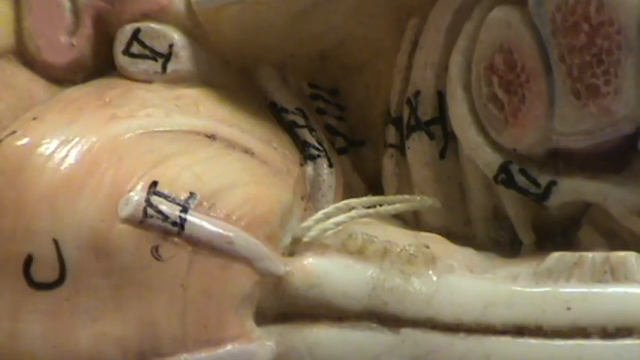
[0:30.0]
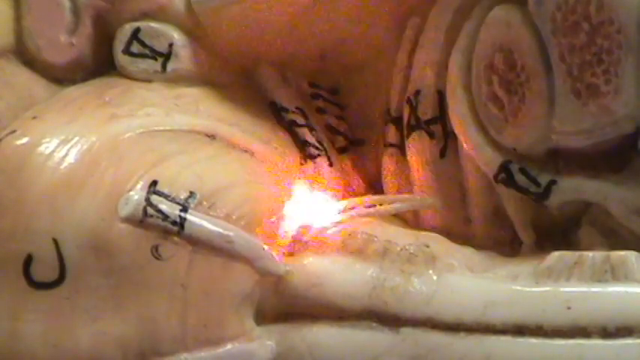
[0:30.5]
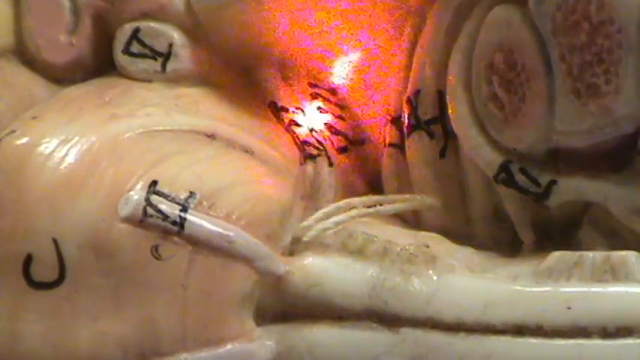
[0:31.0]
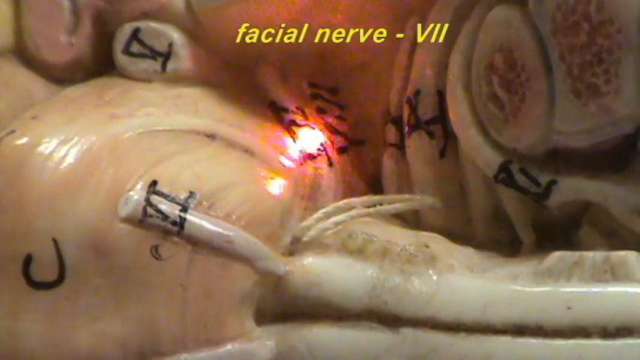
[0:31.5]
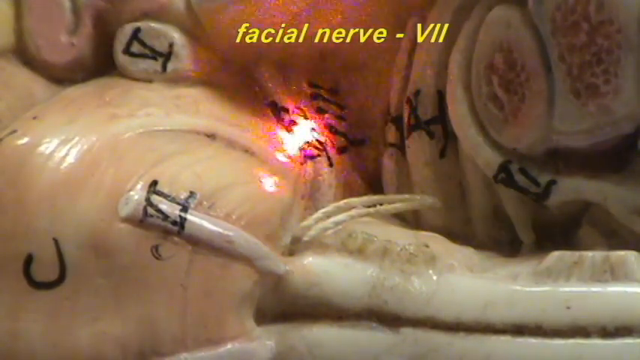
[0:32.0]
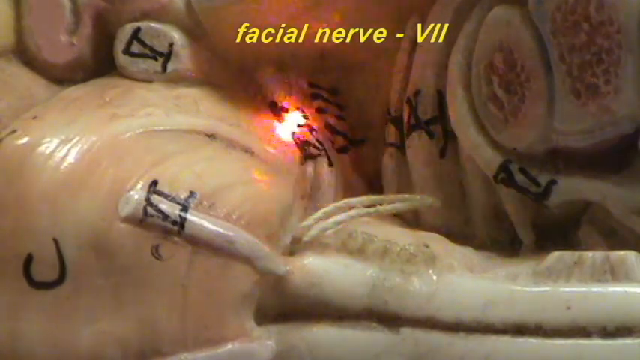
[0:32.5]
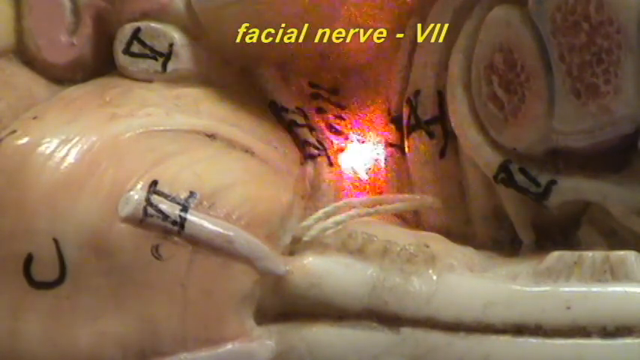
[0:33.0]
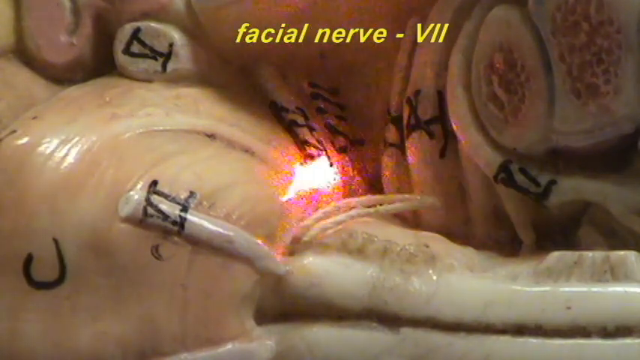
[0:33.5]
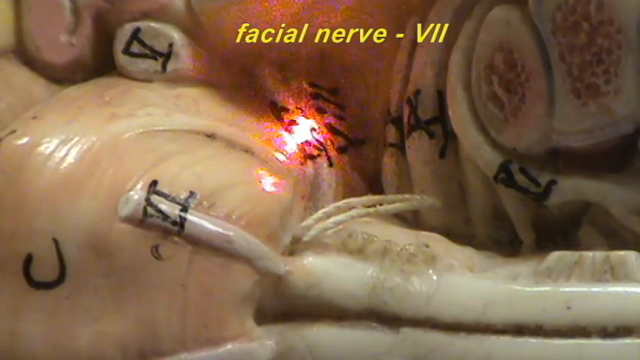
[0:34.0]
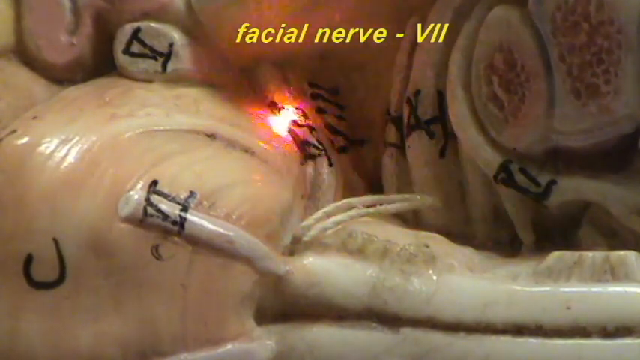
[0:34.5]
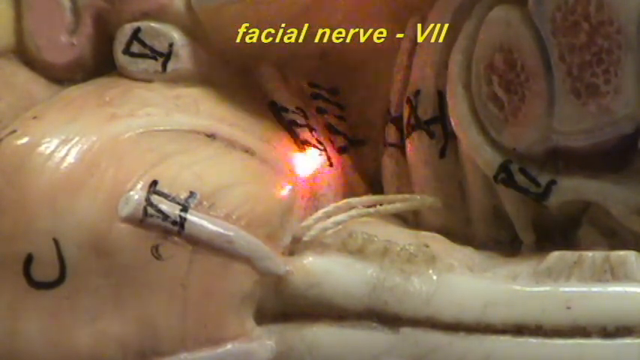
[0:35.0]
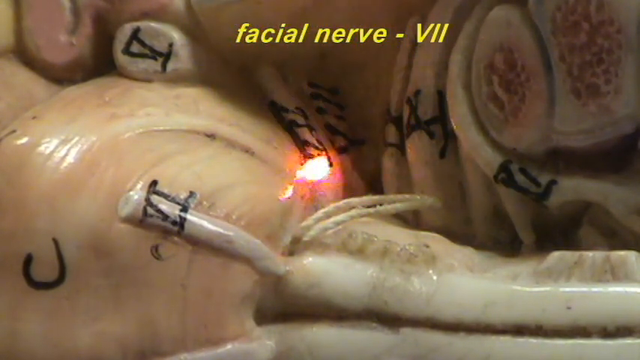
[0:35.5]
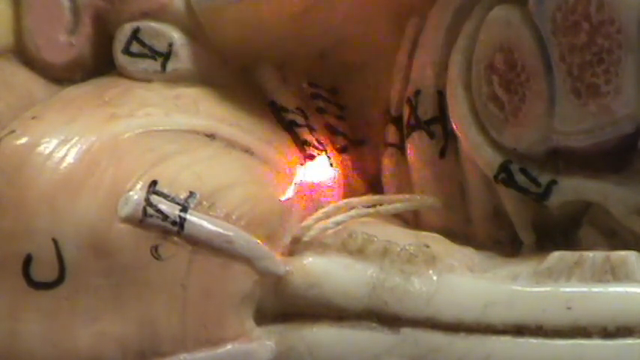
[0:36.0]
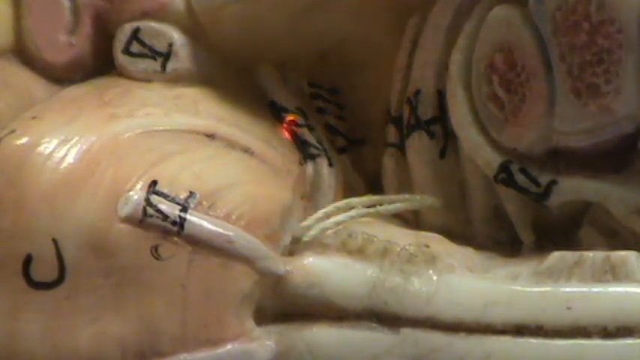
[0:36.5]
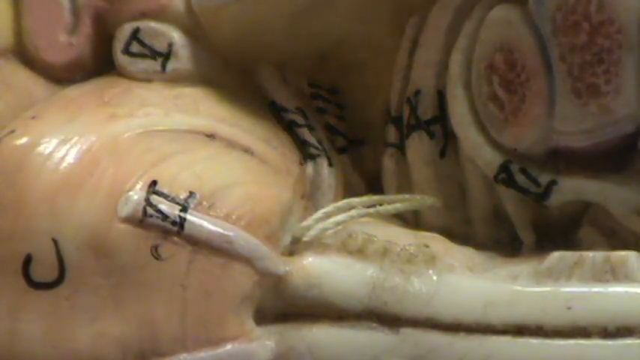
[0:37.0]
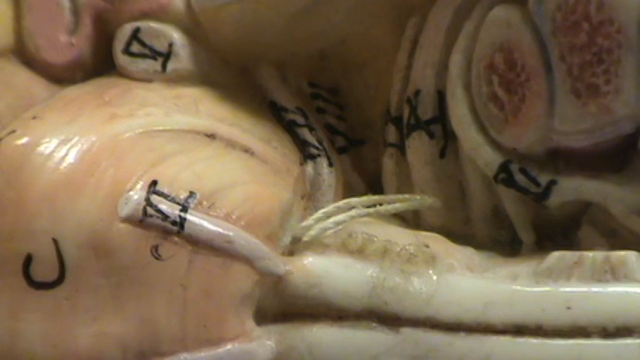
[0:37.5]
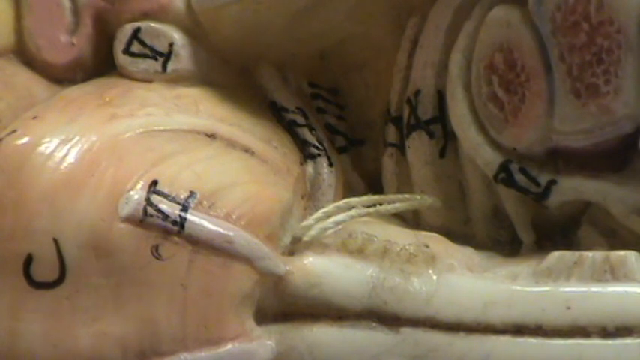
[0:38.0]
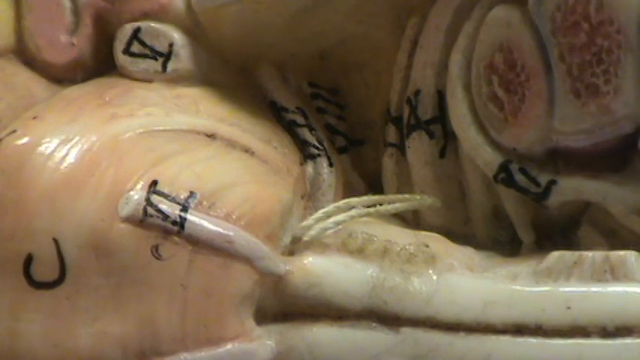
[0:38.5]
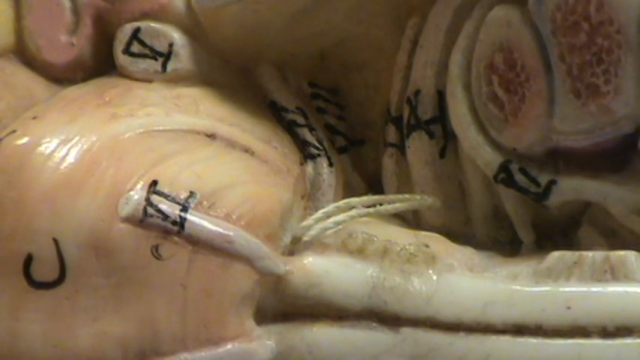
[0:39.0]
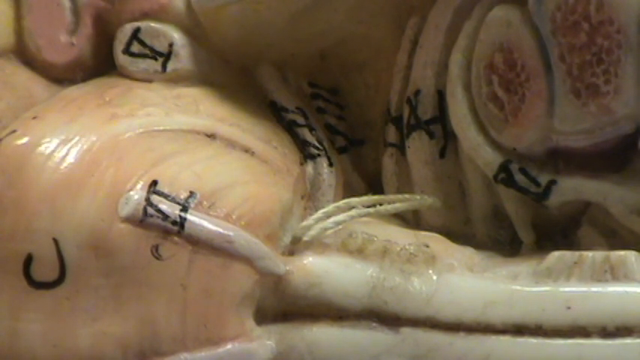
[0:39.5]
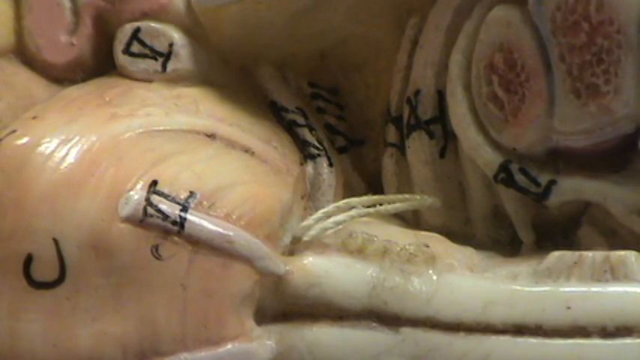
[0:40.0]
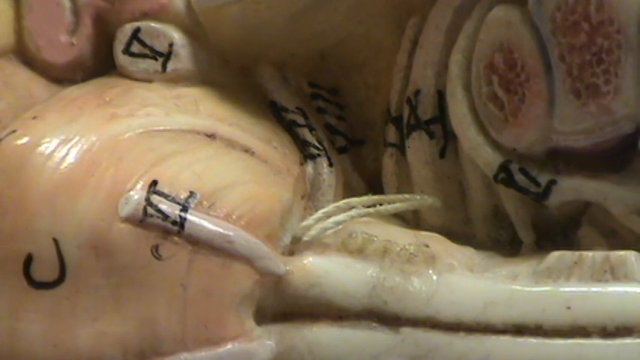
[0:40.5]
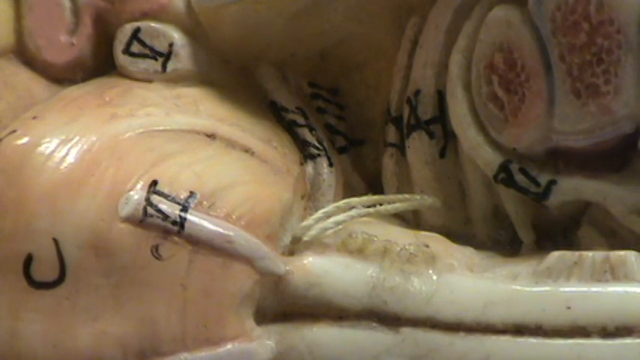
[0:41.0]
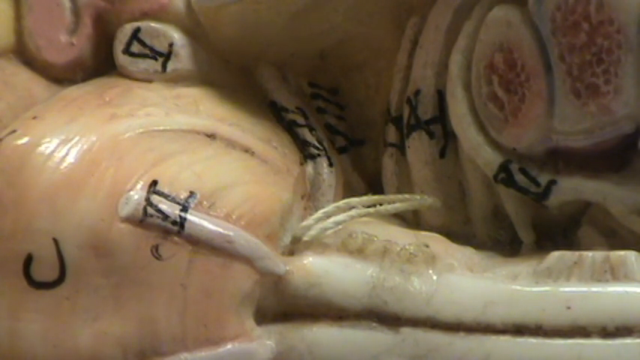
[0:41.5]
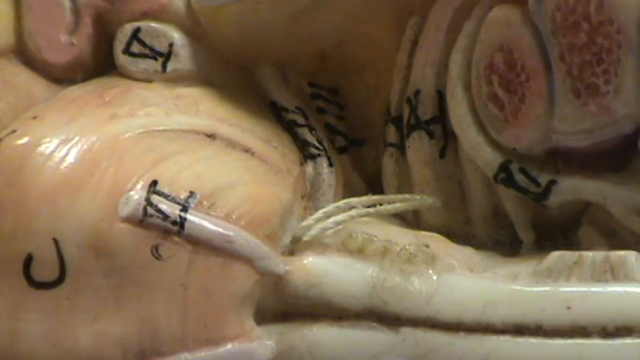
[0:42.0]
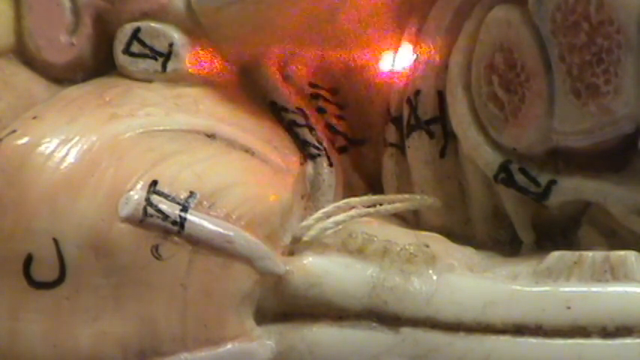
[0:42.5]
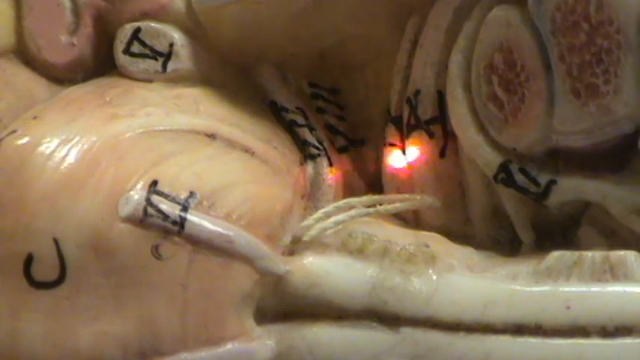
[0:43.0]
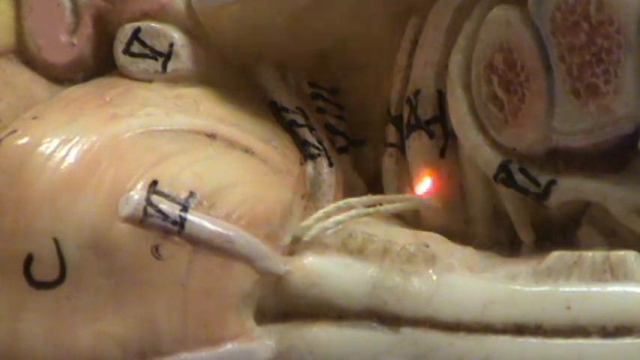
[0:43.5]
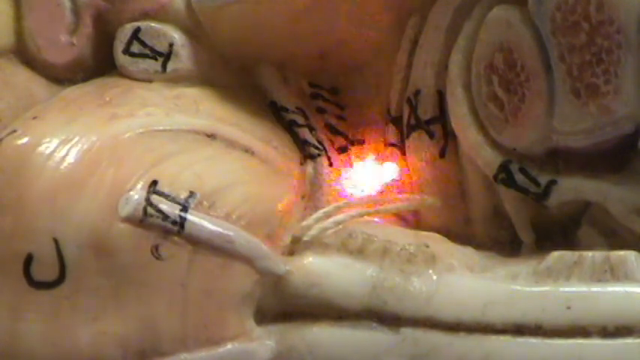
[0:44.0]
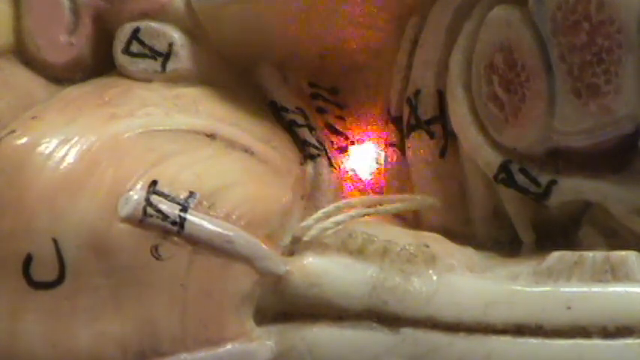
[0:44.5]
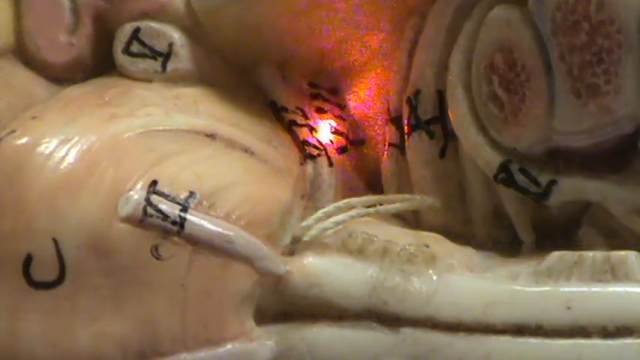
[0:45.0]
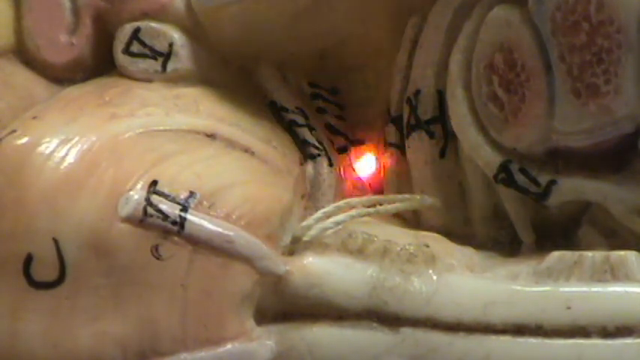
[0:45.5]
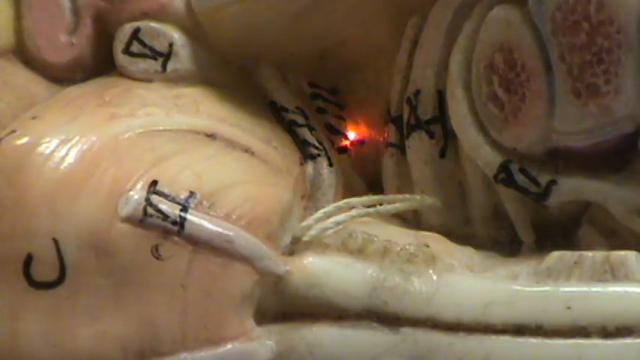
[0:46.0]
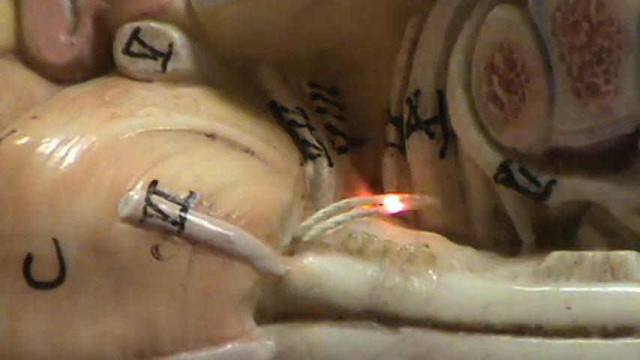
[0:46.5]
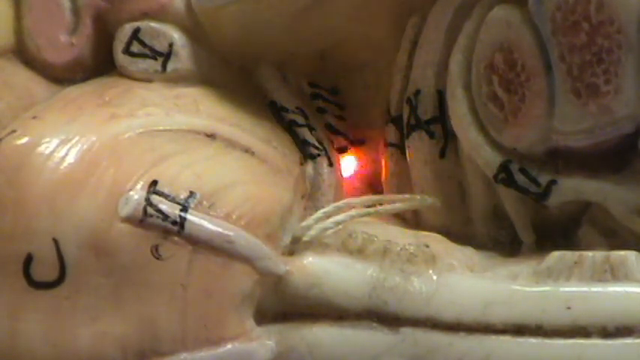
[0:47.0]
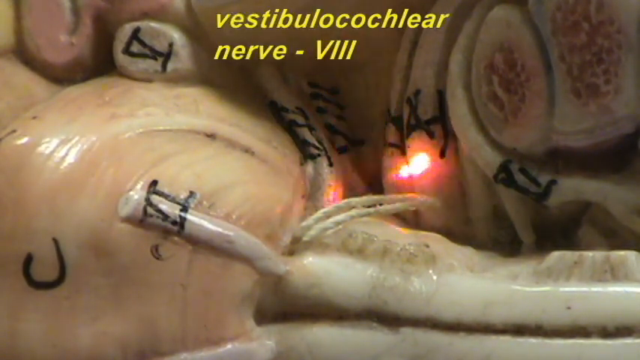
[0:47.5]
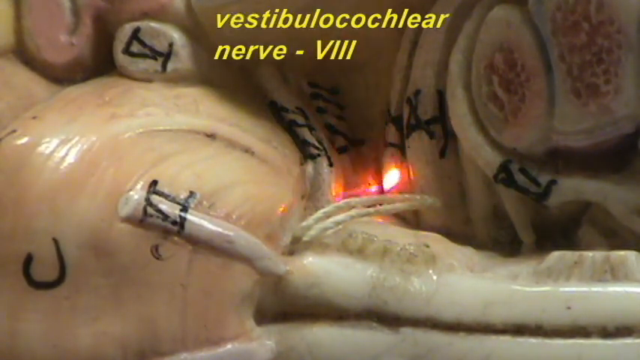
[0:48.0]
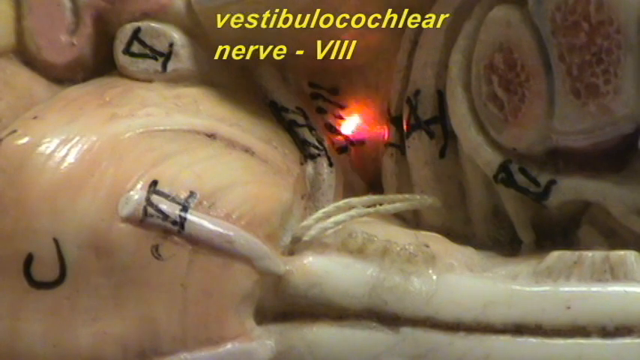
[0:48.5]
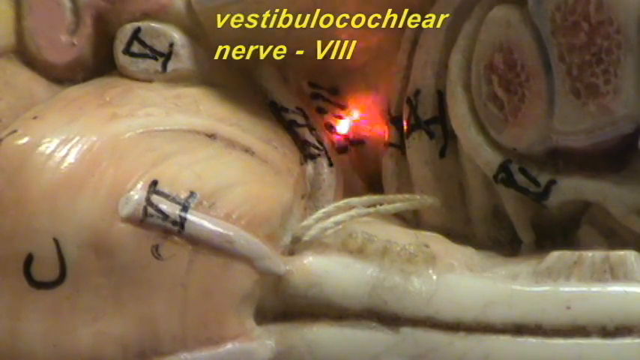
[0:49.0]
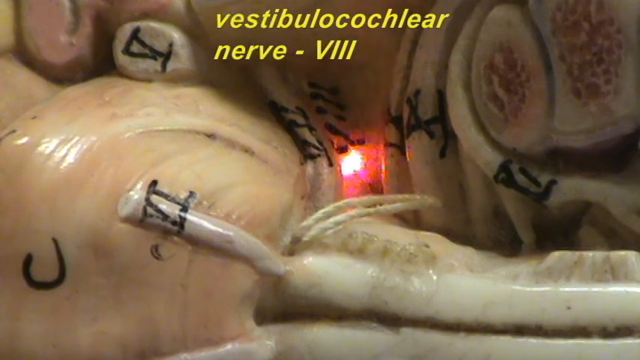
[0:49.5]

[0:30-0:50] The model of the inside of a human body shows the area where the pons and the medulla meet. A title at the top of the screen reads "facial nerve." A red laser pointer points to areas between the pons and the medulla, at the edge of the spinal cord rather than on the spinal cord itself. Next, another word appears on the upper part of the screen, the name of a nerve that lies right next to the spinal cord in the area between the pons and the medulla.